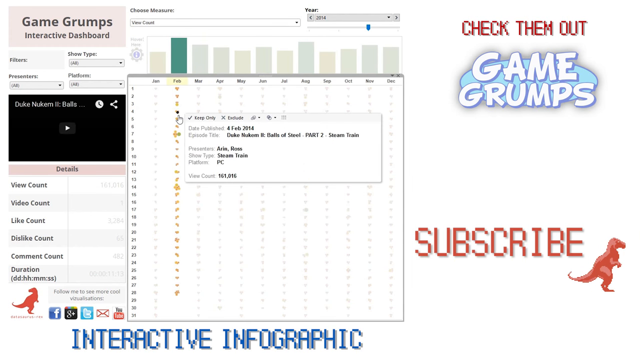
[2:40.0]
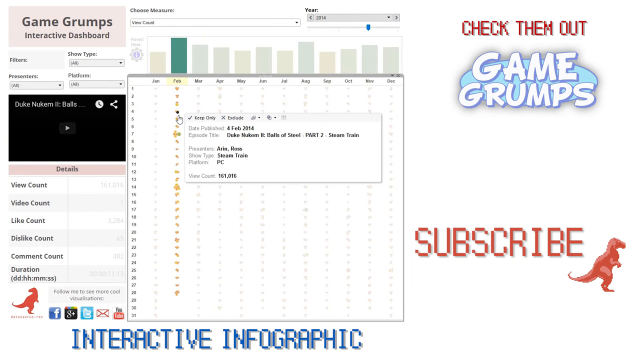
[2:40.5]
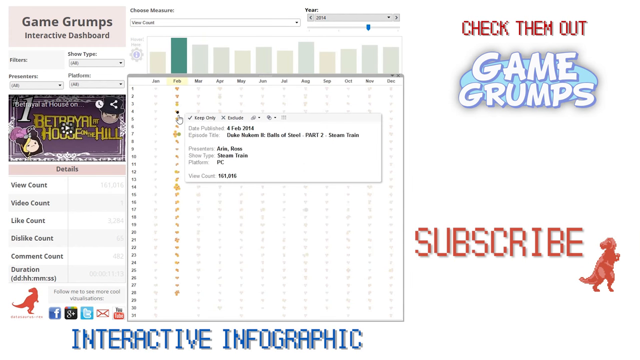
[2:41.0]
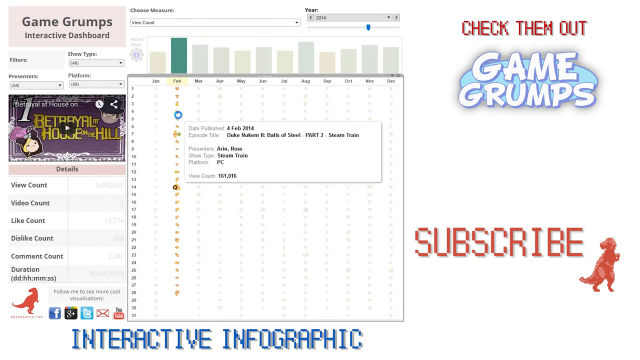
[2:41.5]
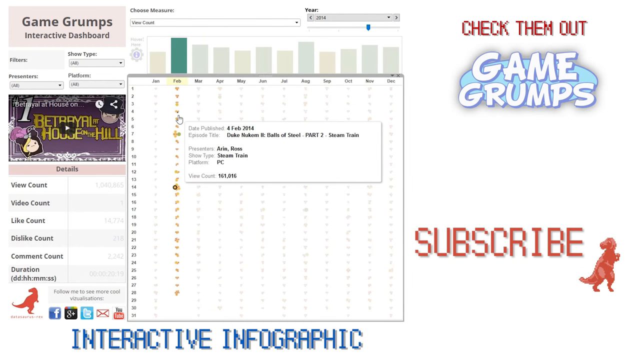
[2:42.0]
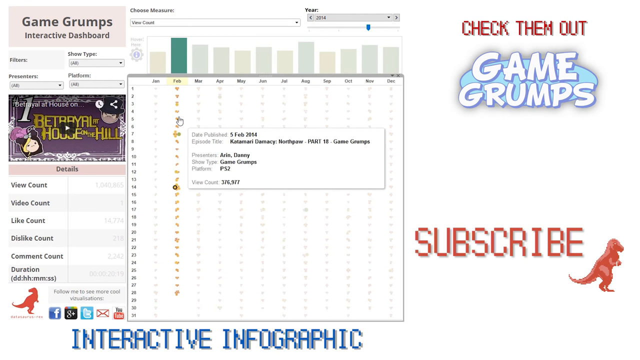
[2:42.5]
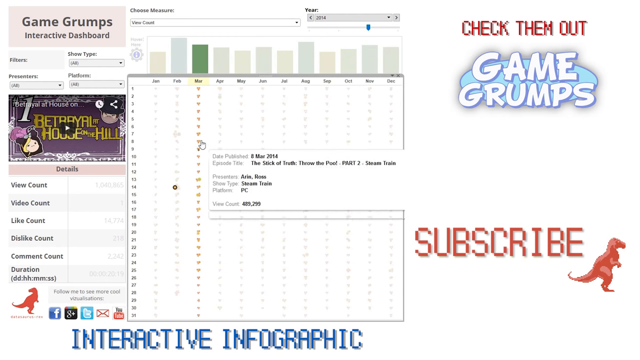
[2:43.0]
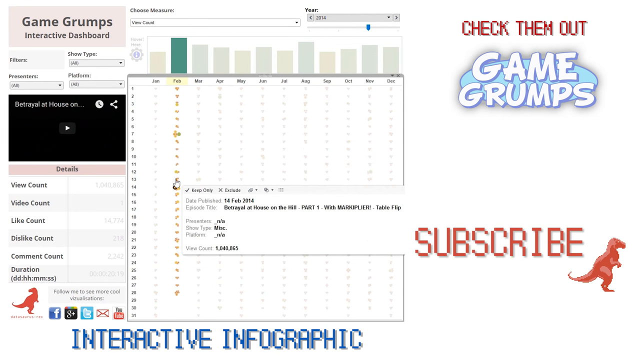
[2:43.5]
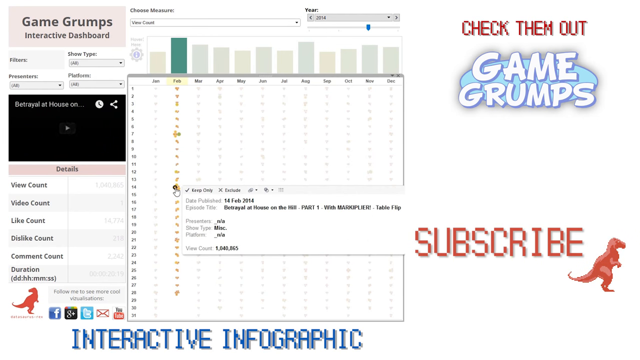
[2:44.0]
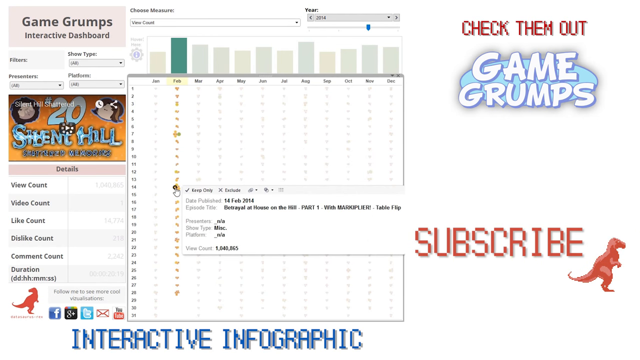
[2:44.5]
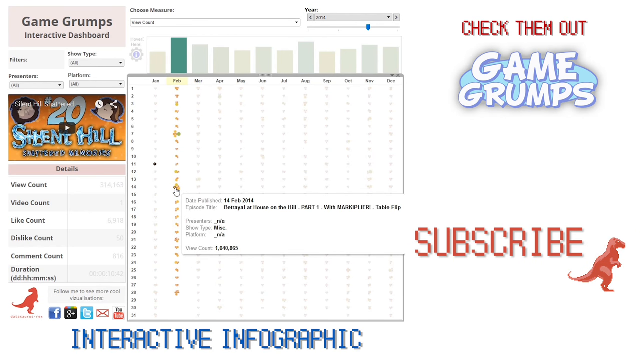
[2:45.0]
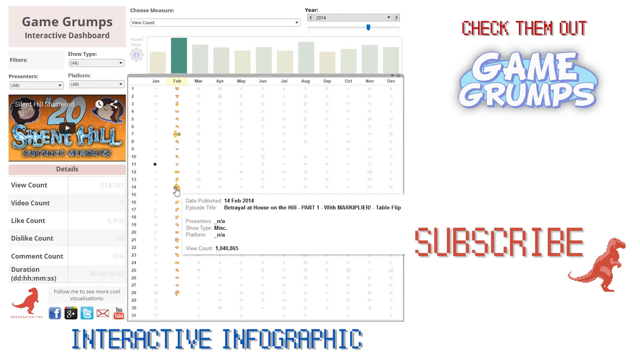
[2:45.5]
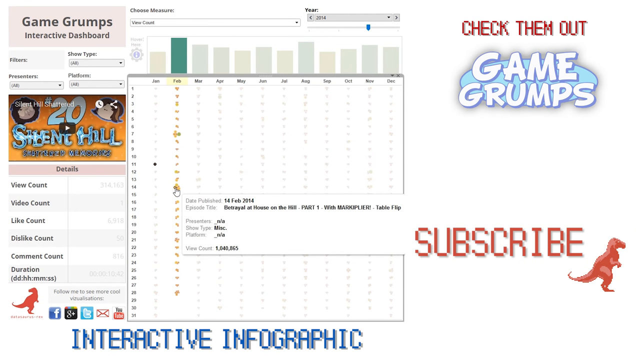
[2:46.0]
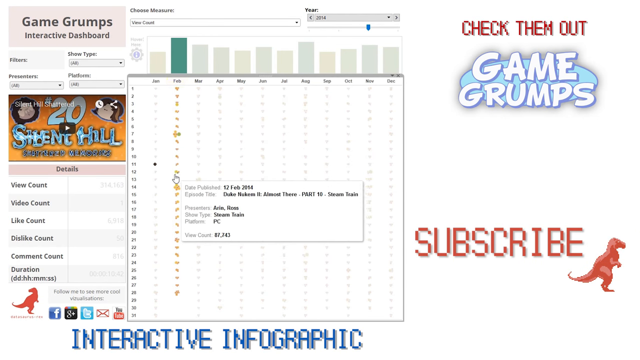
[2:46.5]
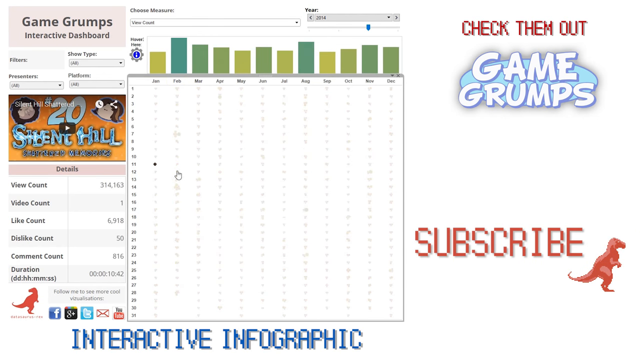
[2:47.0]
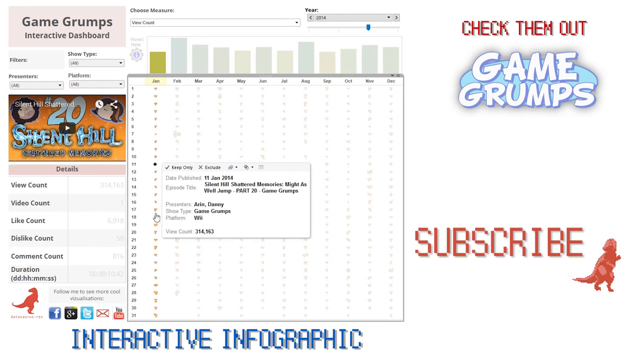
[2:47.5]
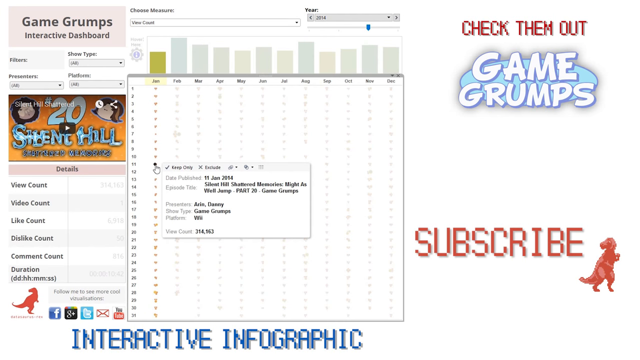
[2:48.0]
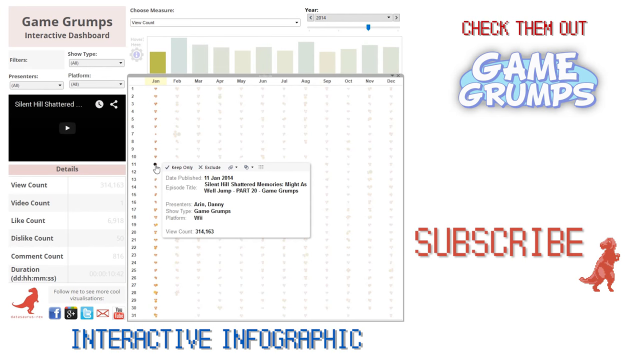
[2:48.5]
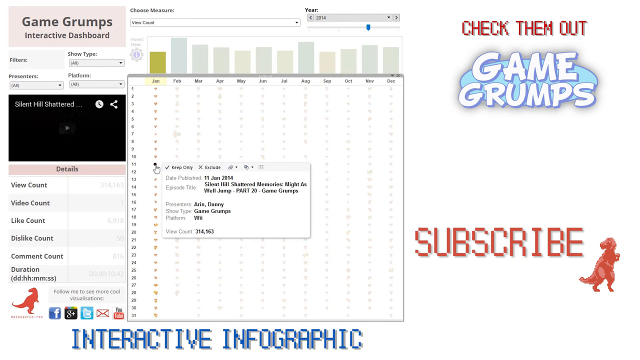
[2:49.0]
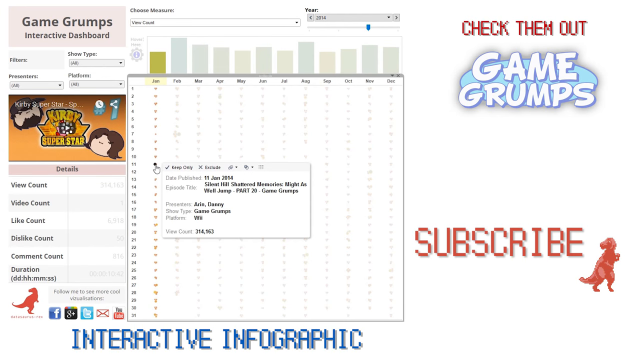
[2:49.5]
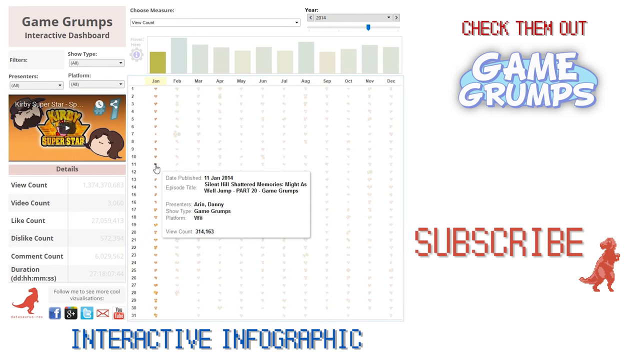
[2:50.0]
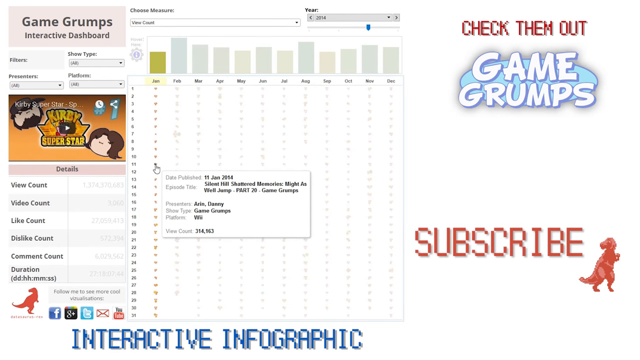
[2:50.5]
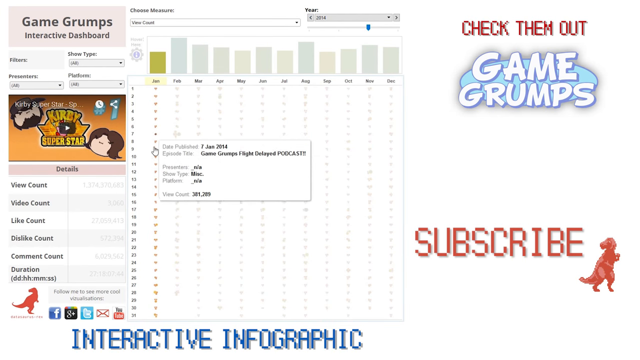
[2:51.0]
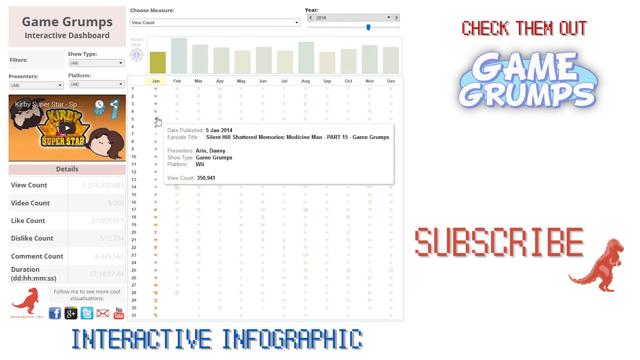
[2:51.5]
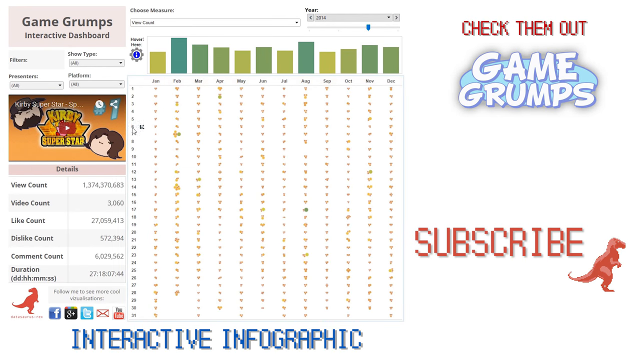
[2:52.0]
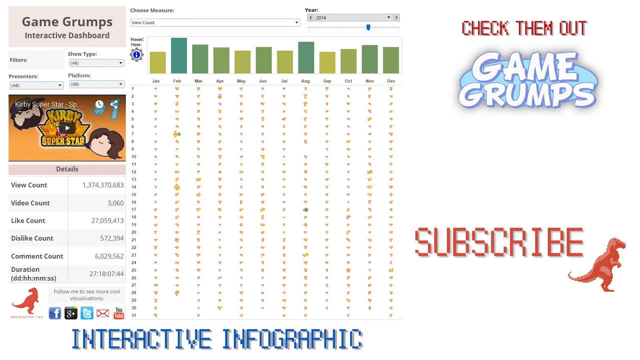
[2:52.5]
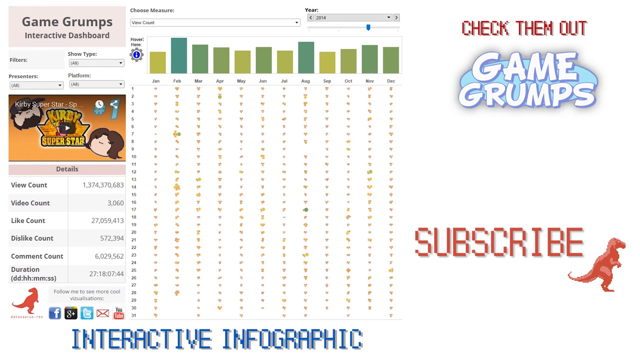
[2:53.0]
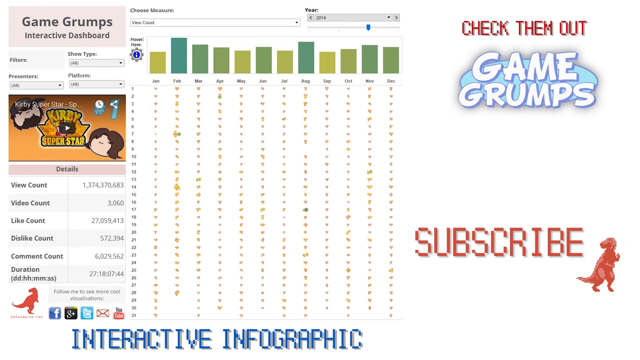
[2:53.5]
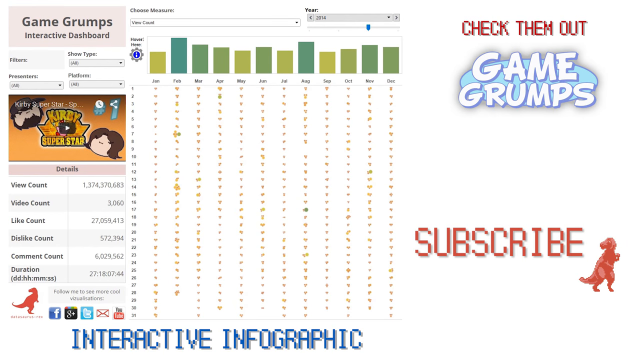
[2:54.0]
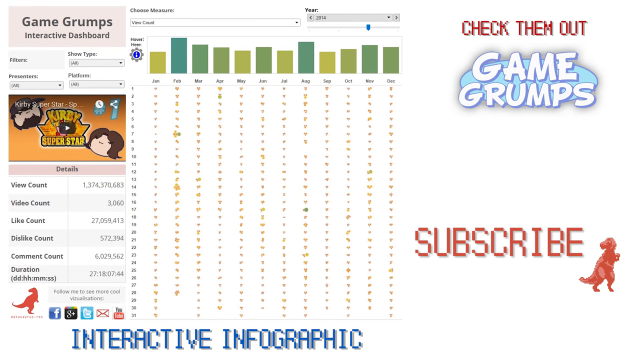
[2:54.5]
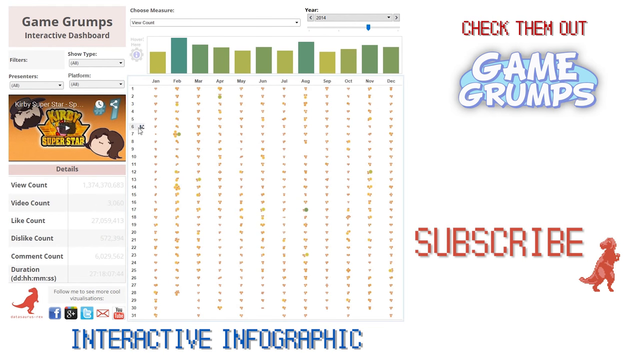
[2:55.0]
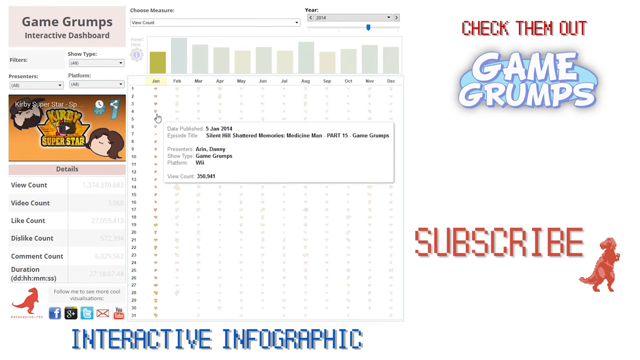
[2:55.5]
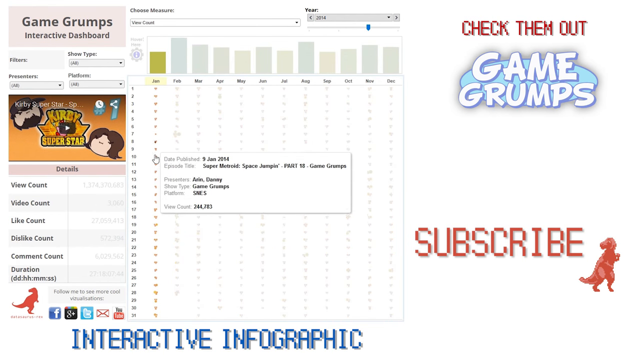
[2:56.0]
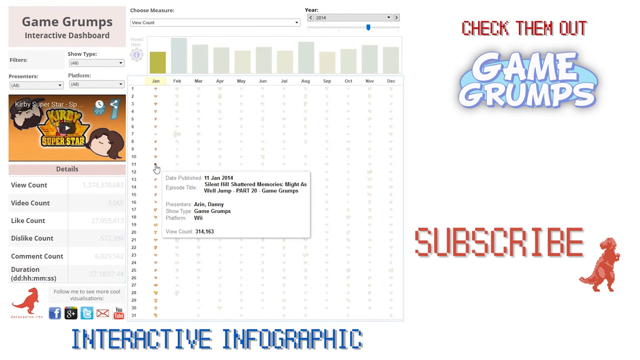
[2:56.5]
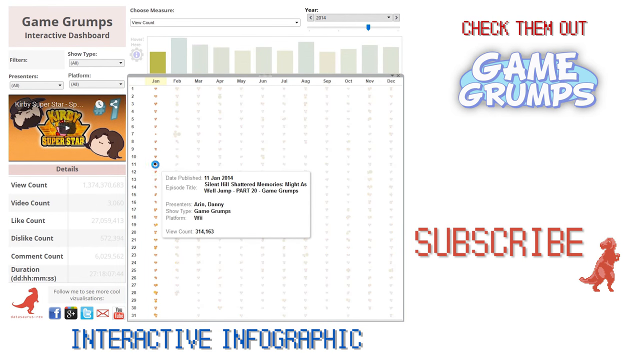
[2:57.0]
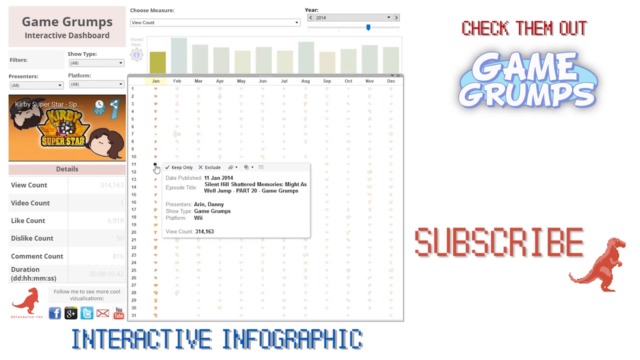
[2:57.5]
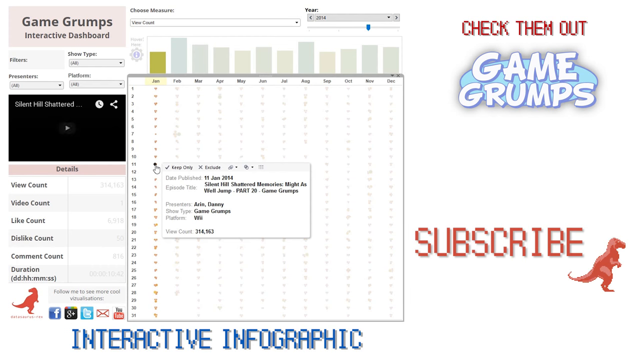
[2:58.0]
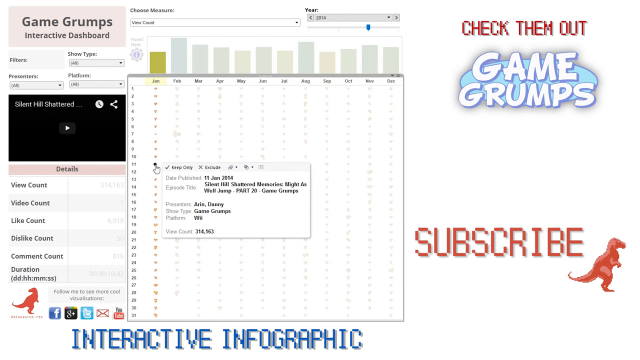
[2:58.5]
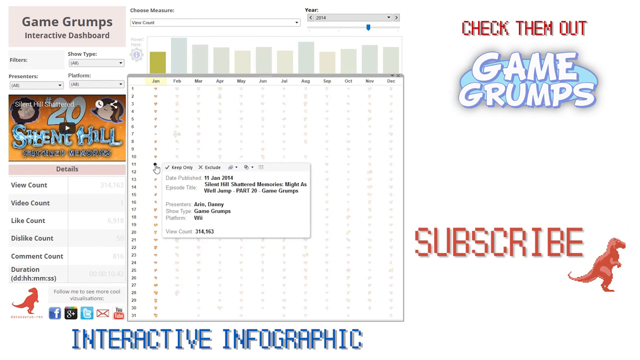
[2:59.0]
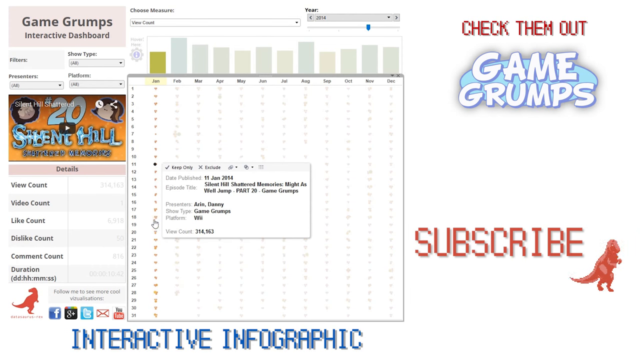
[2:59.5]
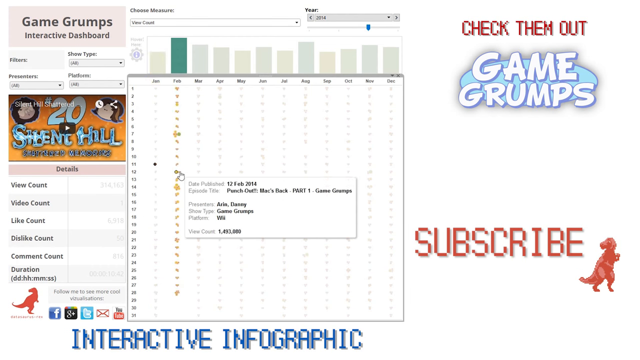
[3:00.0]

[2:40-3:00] The screen with several categories remains, showing dates, date published, episode title, show type, platform, view count, and presenters. Several different categories are interacted with. One entry reads February 14, 2024, Retrail at House on the Hill, presenters N/A, show type miscellaneous, platform N/A, view count around 1 million. Silent Hill by Game Grumps is on the far left. The titles have clickable icons in what appears to be an Excel sheet. The months are shaded in different greens, such as emerald, lime green, and a darker green. Meanwhile, the subscribe button is still there, and the red dinosaur dances, hops, and looks to the right. Interactive text in blue is still visible, almost in a retro 3-bit animated style.